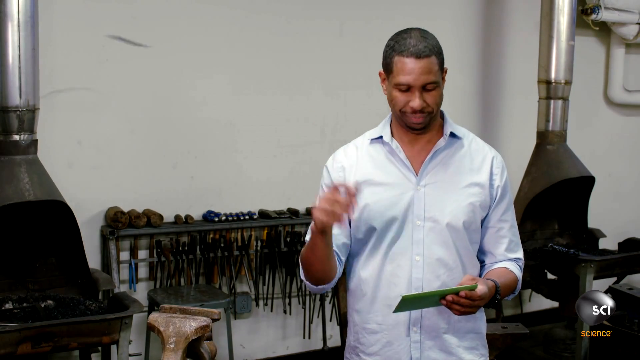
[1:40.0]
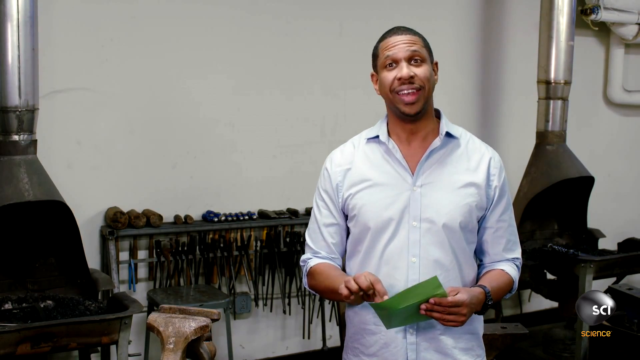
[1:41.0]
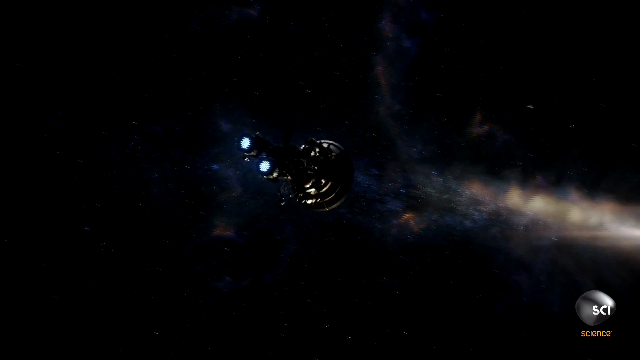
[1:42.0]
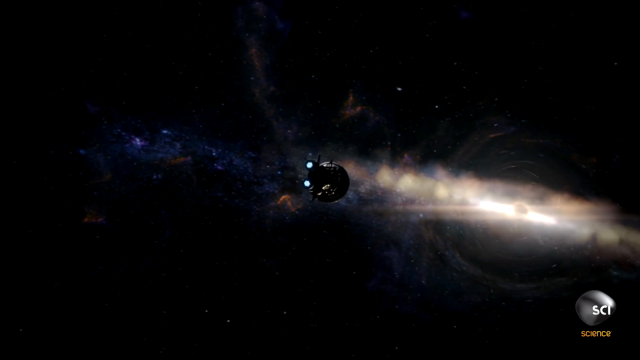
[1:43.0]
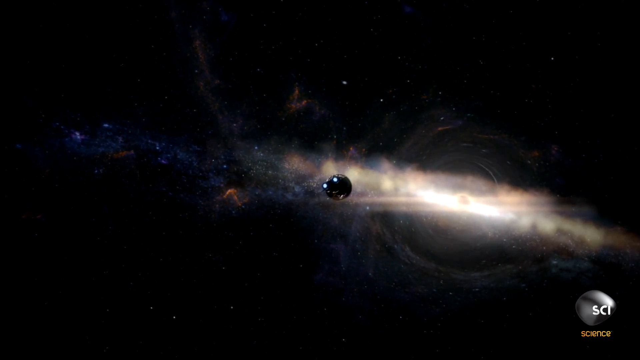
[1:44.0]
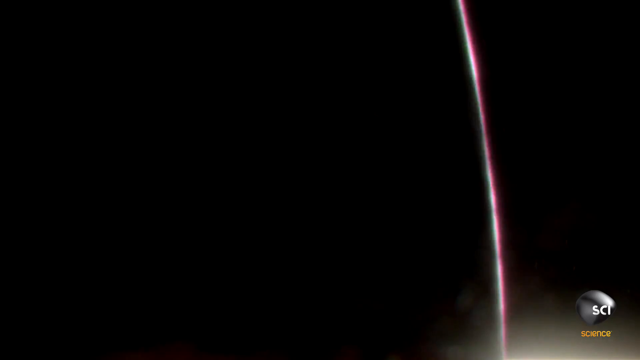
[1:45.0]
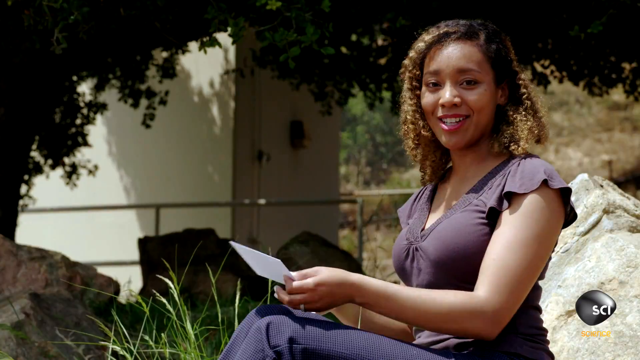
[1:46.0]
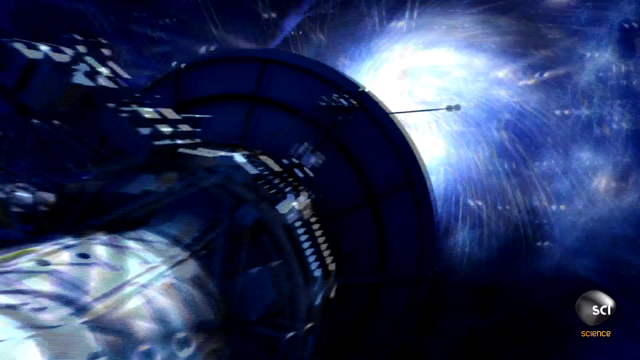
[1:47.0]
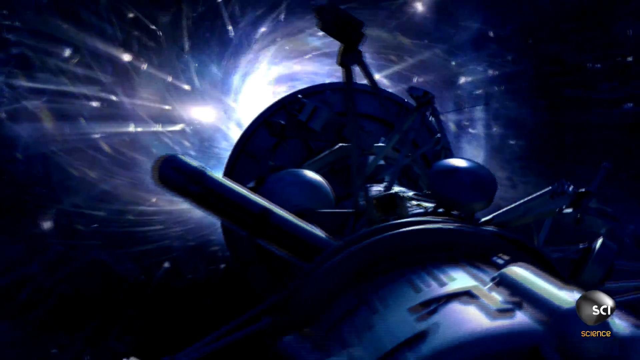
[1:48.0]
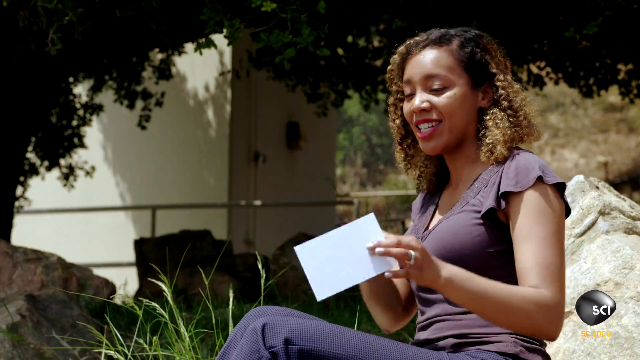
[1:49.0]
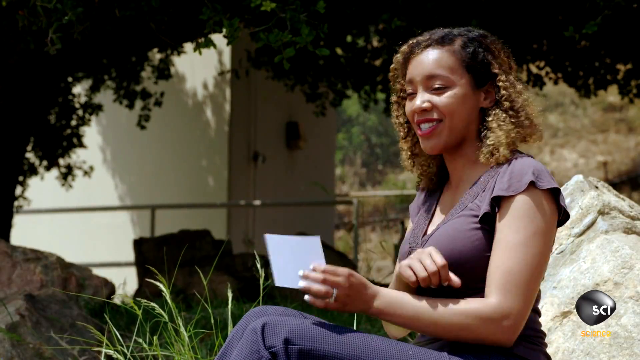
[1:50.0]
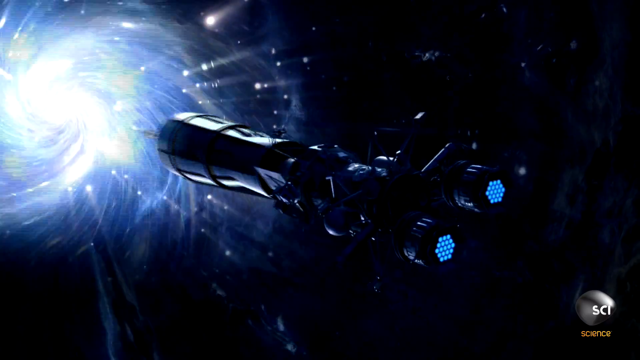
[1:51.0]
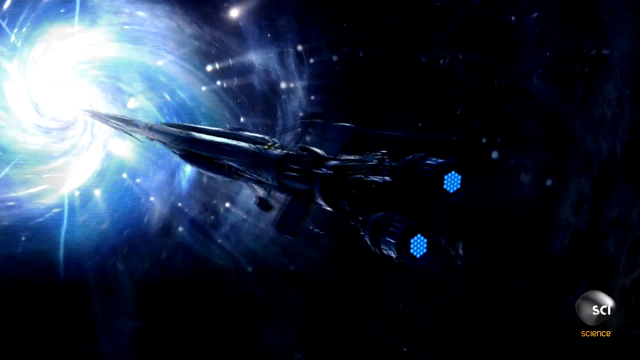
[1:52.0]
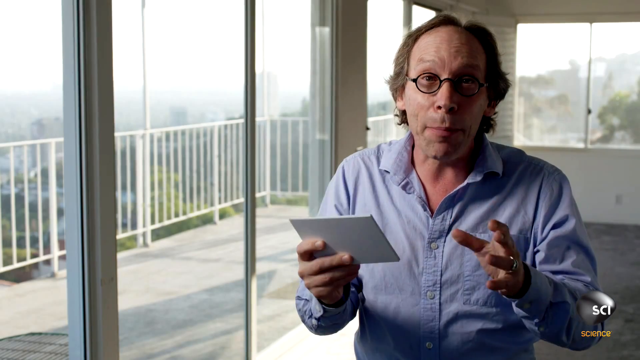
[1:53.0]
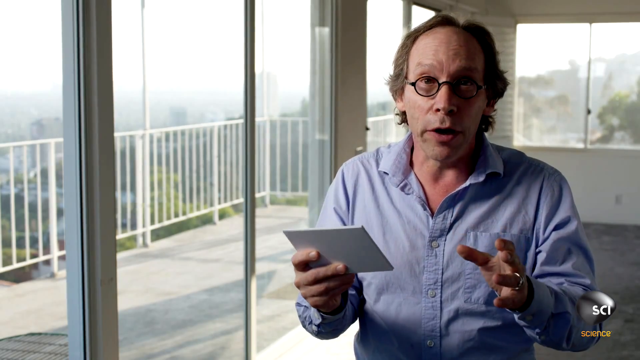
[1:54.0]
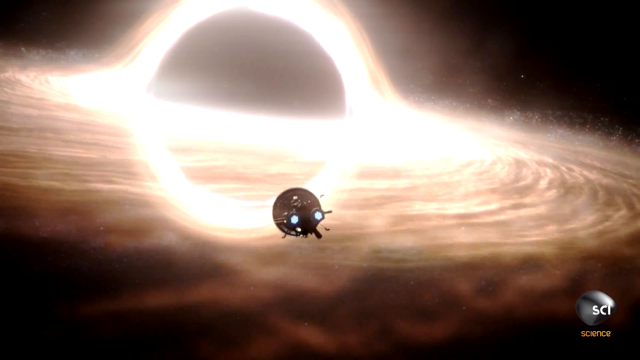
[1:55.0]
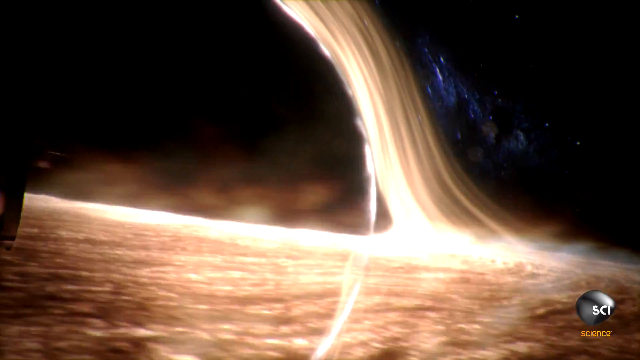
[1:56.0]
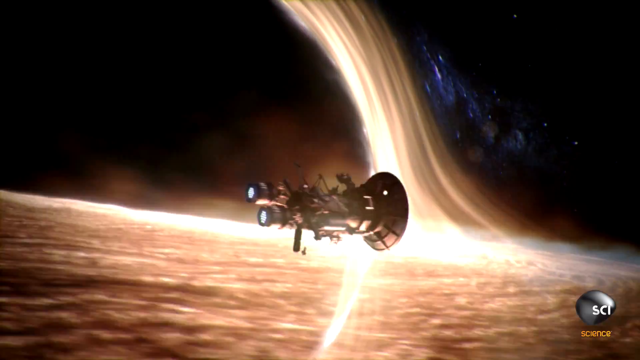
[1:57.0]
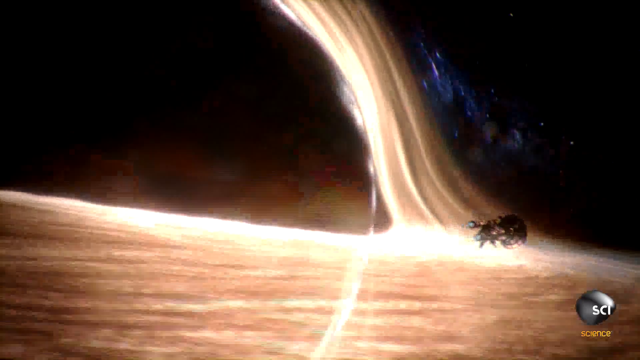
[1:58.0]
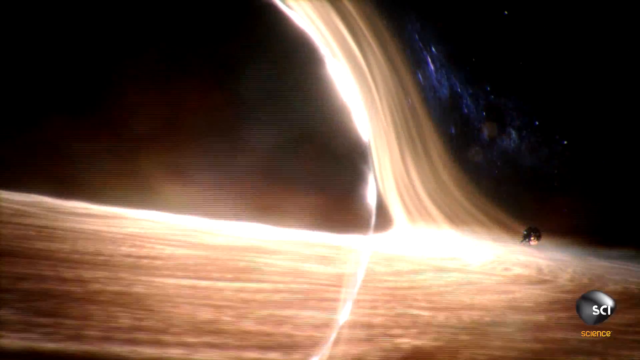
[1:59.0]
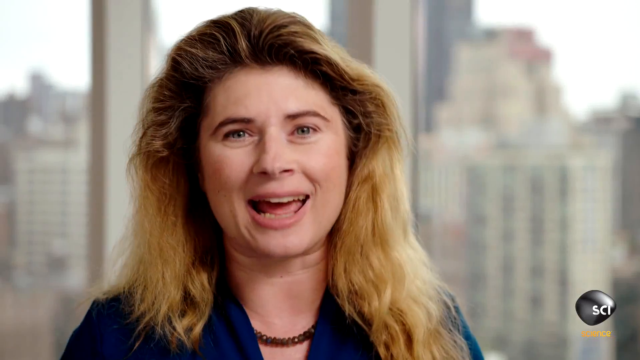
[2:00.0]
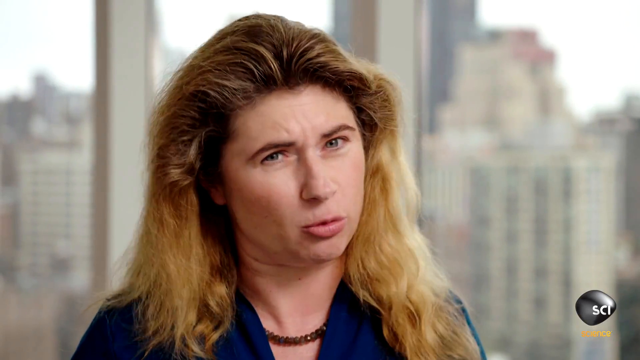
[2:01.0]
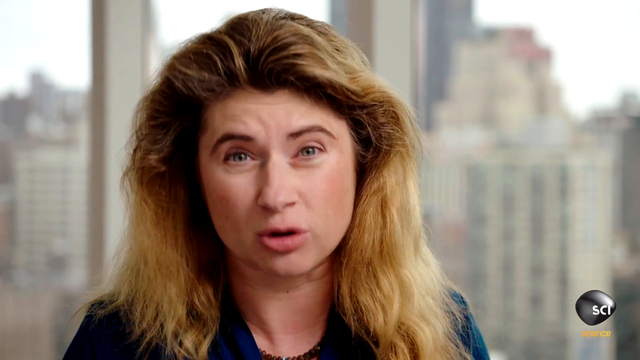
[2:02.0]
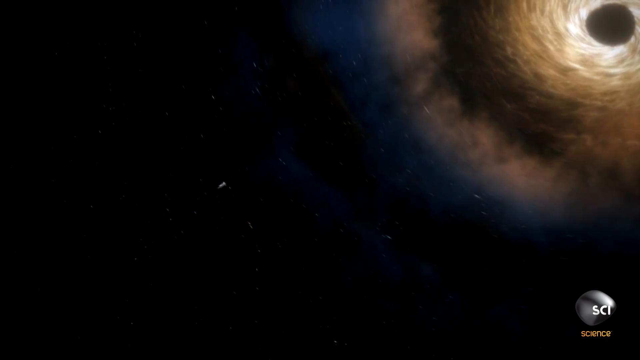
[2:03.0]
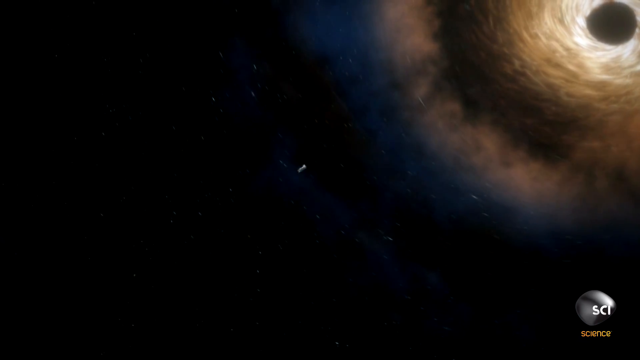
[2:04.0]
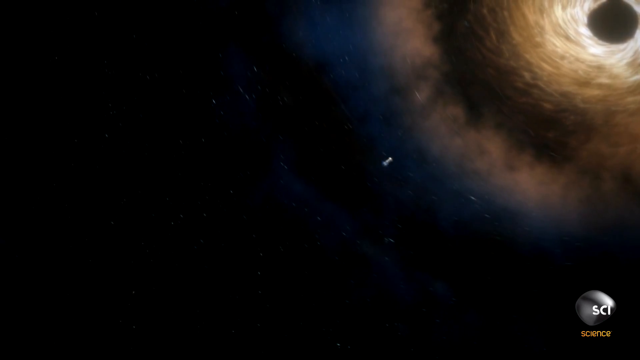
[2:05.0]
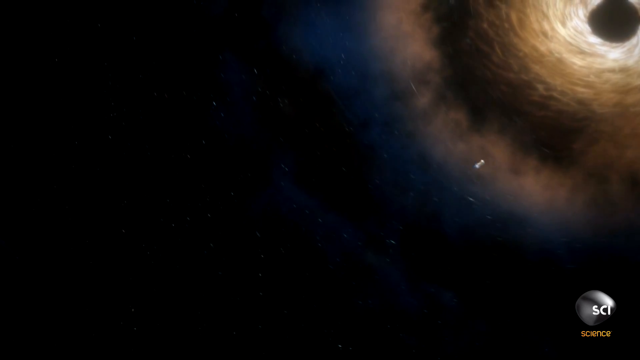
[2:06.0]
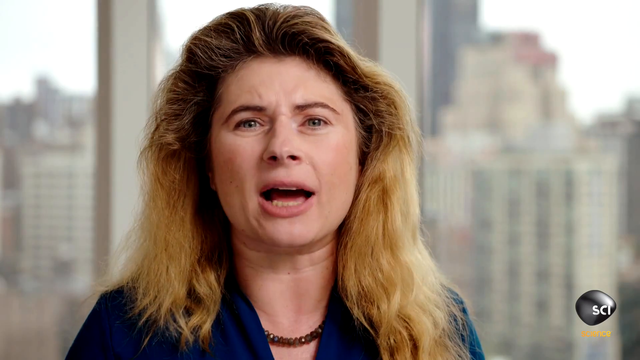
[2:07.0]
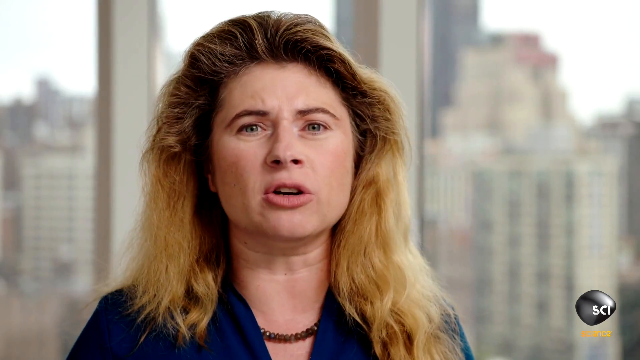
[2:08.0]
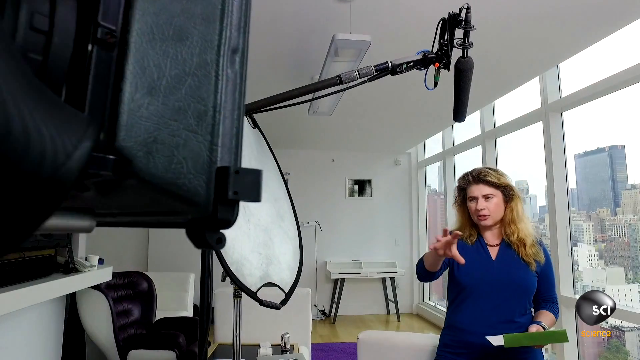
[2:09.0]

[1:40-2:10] A man in a white shirt stands alone in a room with white walls, a watch on his left wrist. He looks down at the envelope in his left hand and pries it open with his right. The video switches to a dark object zipping close to the viewer's point of view before heading right toward a distant galaxy or solar system, followed by another 3D illustration of a black hole. A woman sits outside facing left, holding a white piece of paper in her left hand. A 3D-generated satellite in space appears, then the video returns to the seated woman outside, who wears a purple blouse. An illustration shows the 3D-generated satellite being sucked into a point of light on the left side of the frame. The man in the blue shirt with glasses speaks to the viewer. A 3D-generated probe heads toward a black hole, and the angle switches to show the probe gliding over the edge of the black hole's energy toward the right side of the frame. A close-up shows the red-haired woman speaking to the viewer, shaking her head and tilting her neck. An illustration shows a ship being sucked into a black hole located in the upper right corner of the frame. The video returns to the red-haired woman, then switches angles as she faces left, fingers curled on her left hand, speaking, while the camera pans slowly to the right.